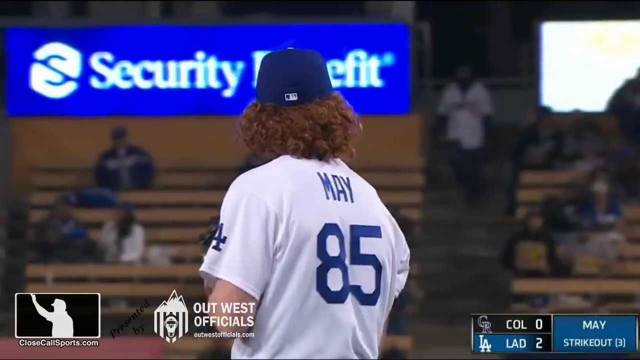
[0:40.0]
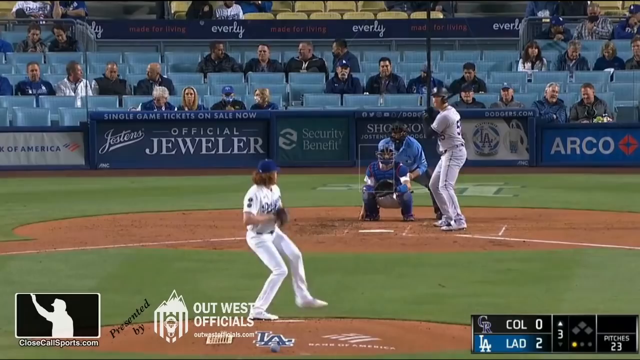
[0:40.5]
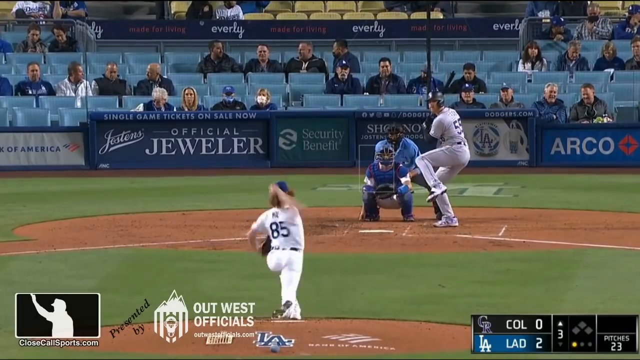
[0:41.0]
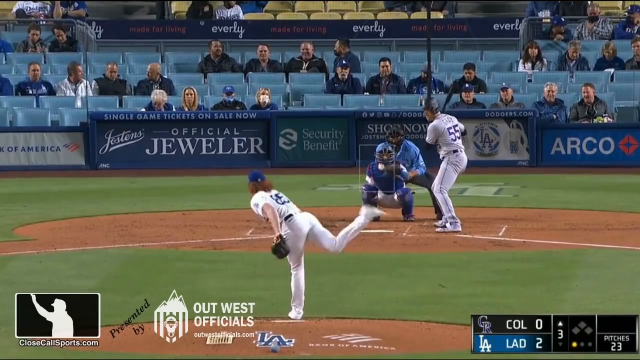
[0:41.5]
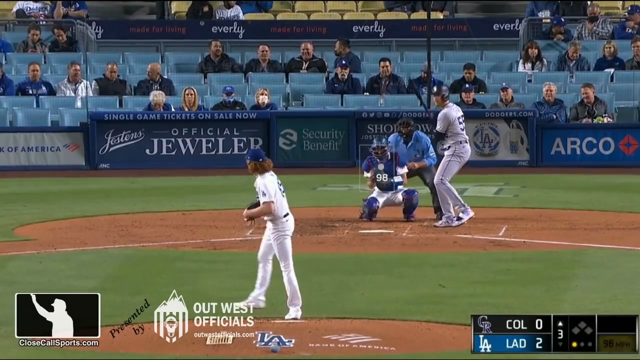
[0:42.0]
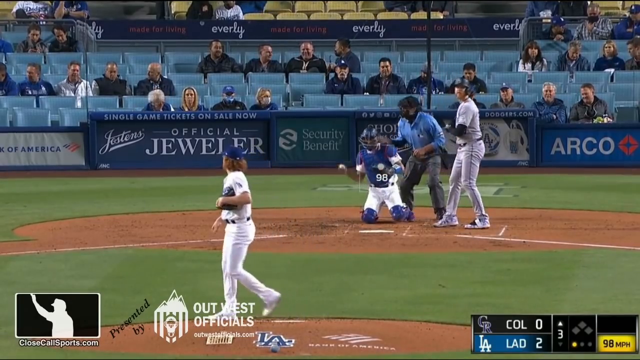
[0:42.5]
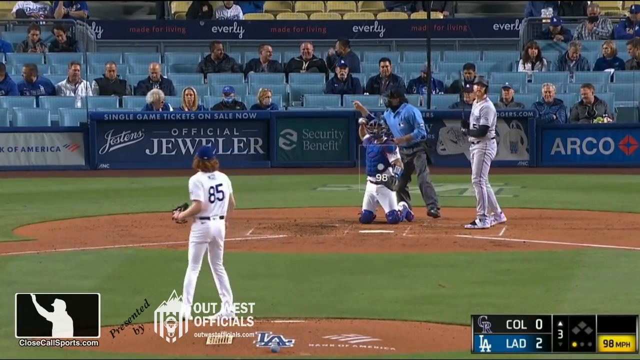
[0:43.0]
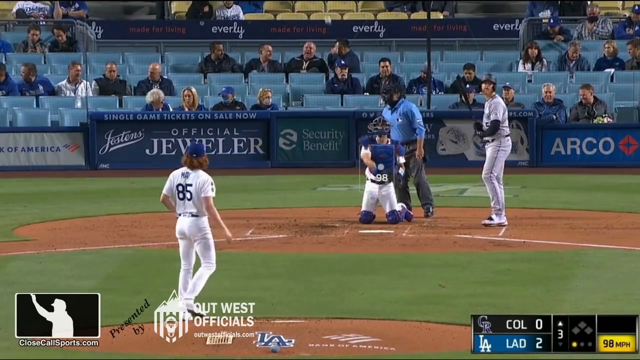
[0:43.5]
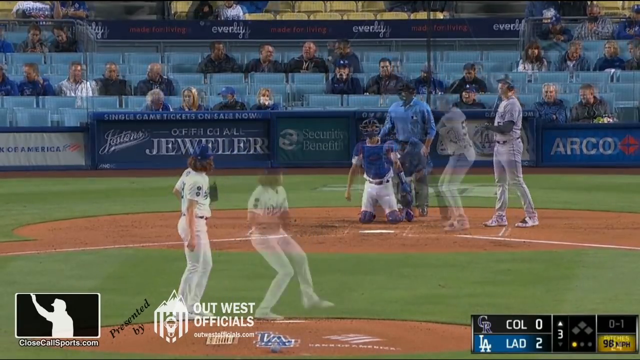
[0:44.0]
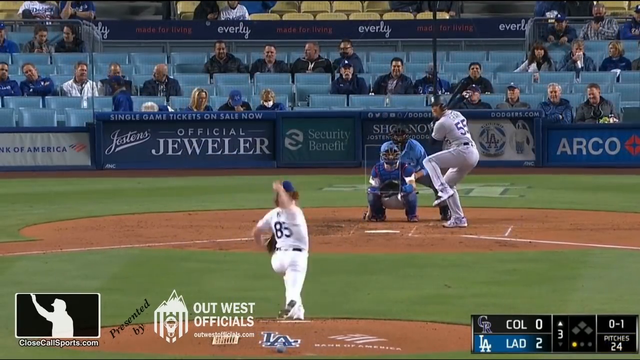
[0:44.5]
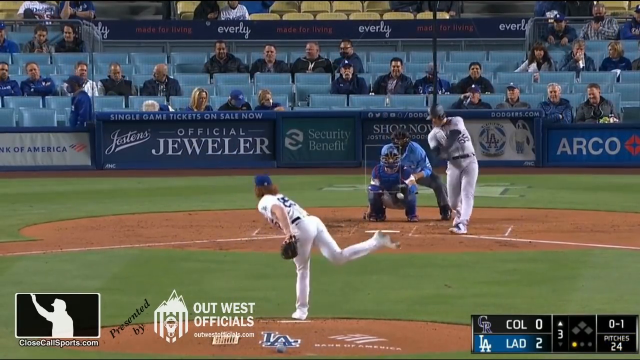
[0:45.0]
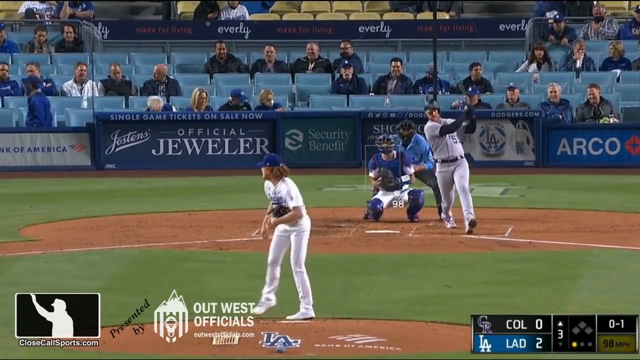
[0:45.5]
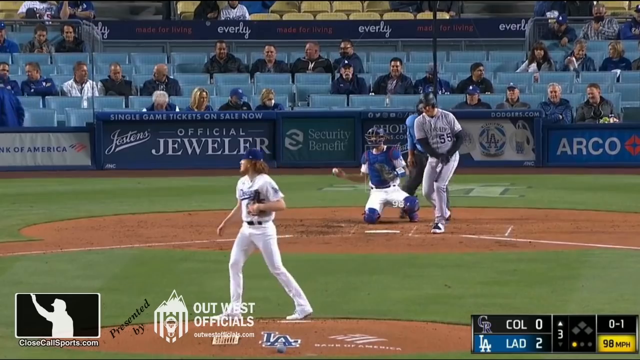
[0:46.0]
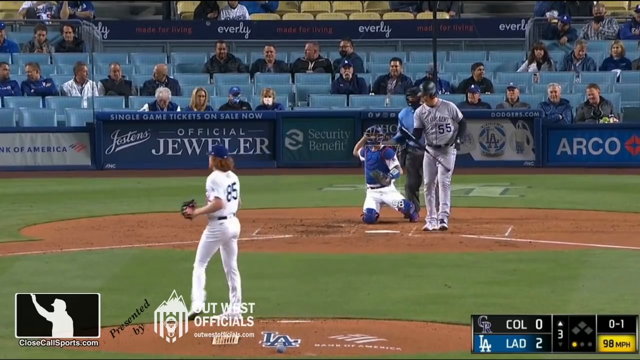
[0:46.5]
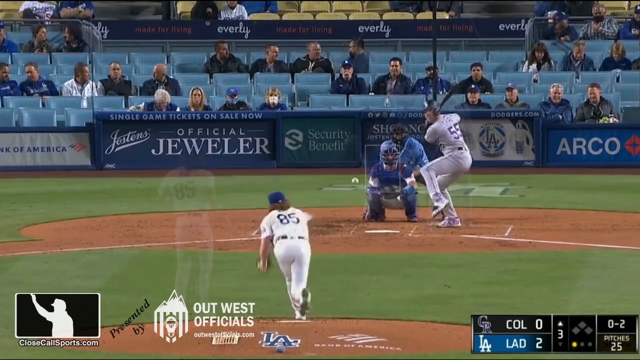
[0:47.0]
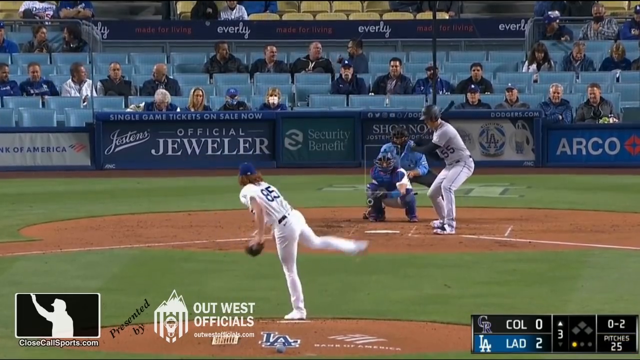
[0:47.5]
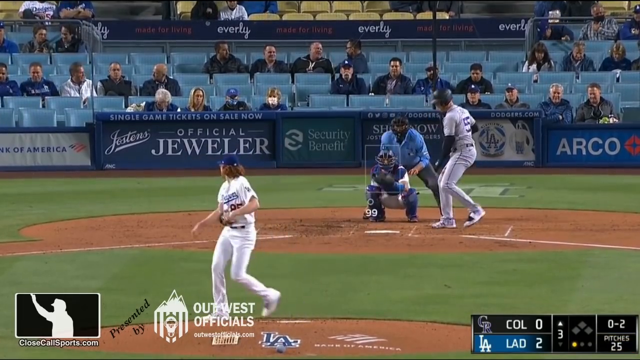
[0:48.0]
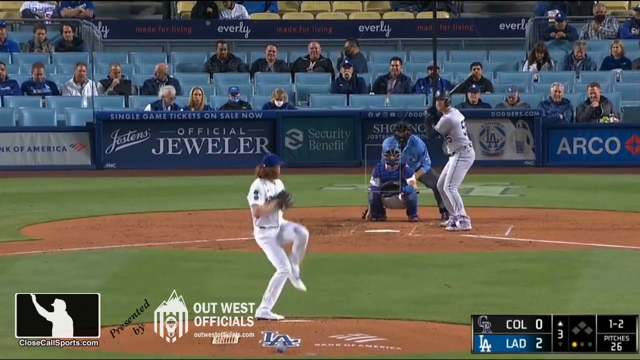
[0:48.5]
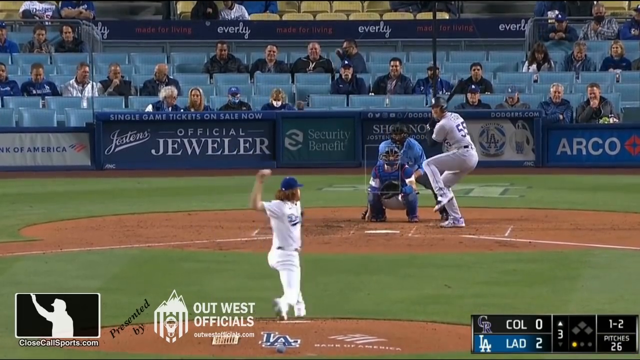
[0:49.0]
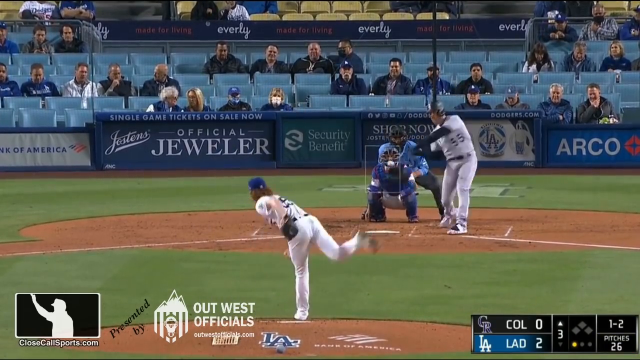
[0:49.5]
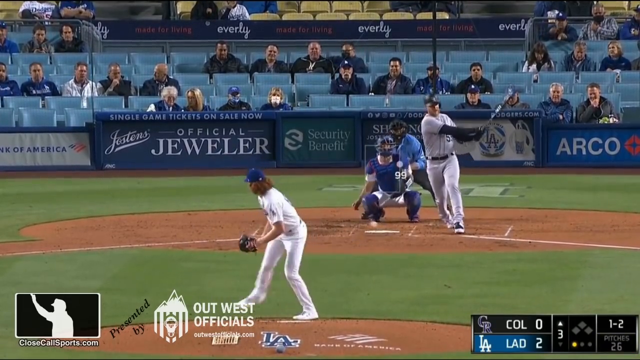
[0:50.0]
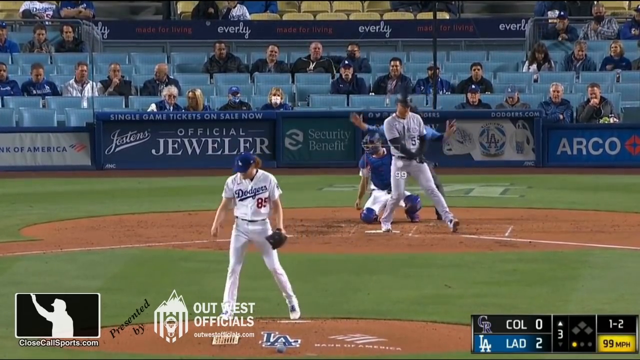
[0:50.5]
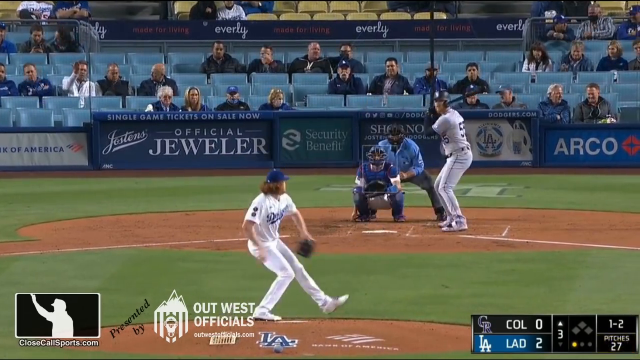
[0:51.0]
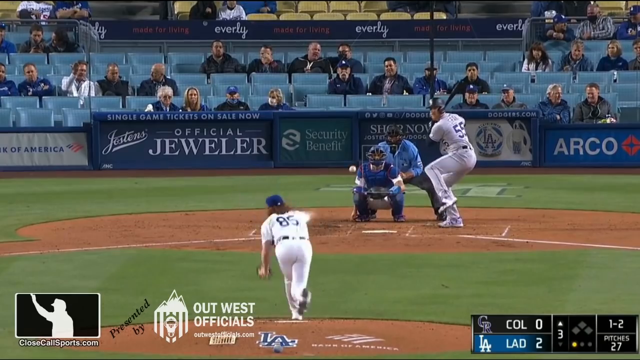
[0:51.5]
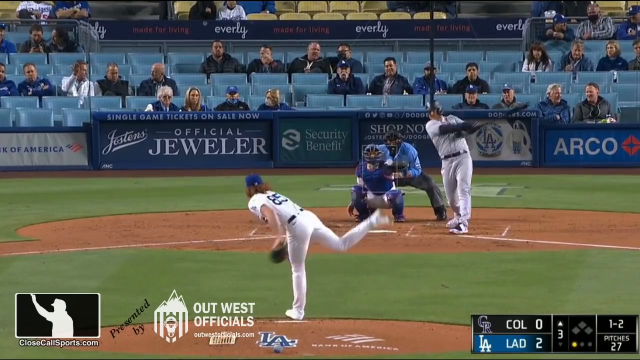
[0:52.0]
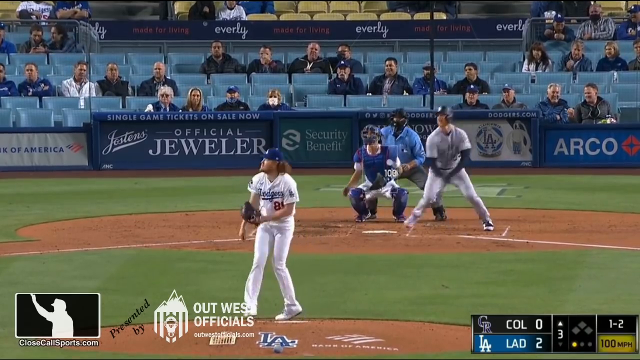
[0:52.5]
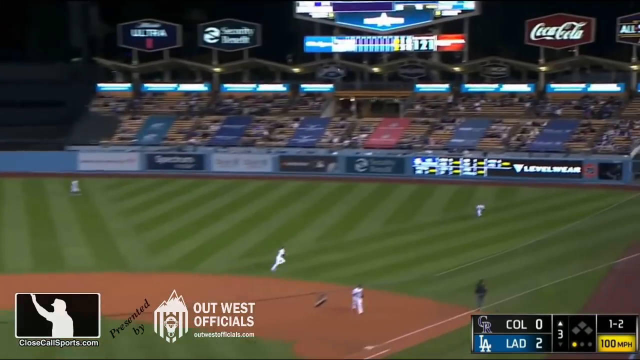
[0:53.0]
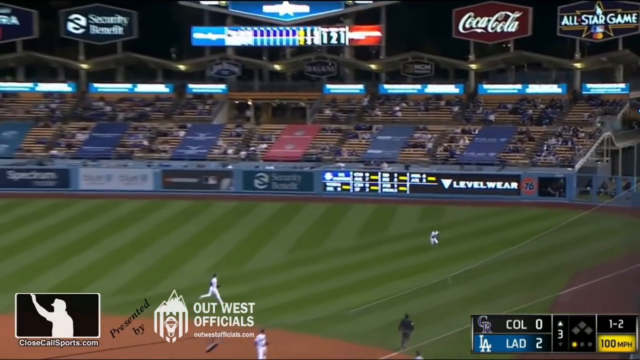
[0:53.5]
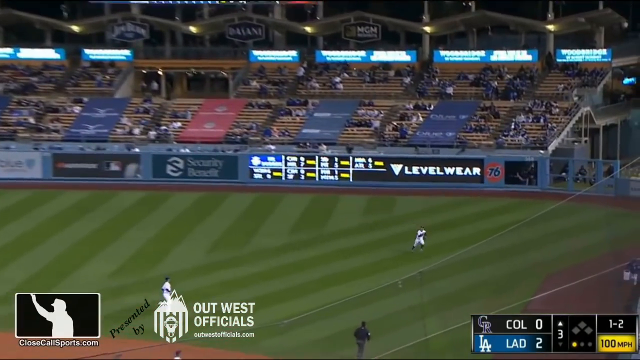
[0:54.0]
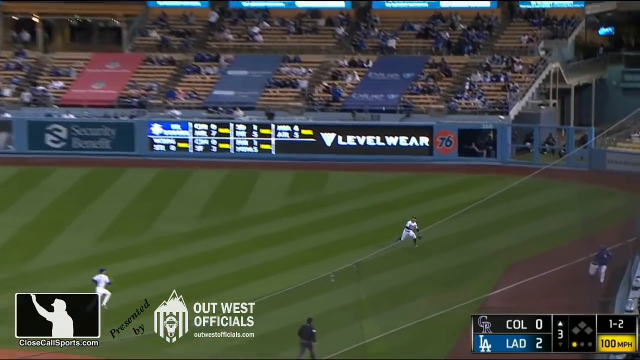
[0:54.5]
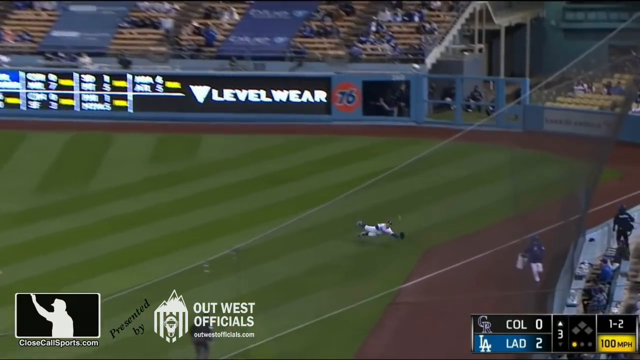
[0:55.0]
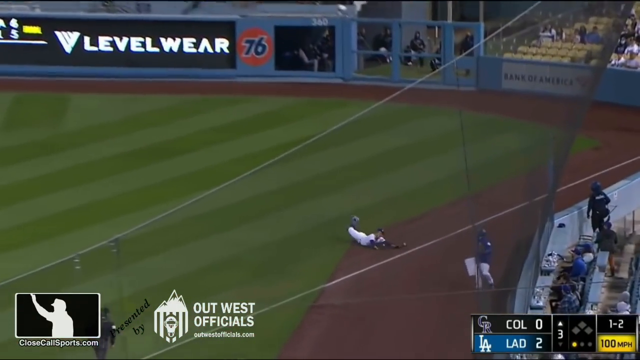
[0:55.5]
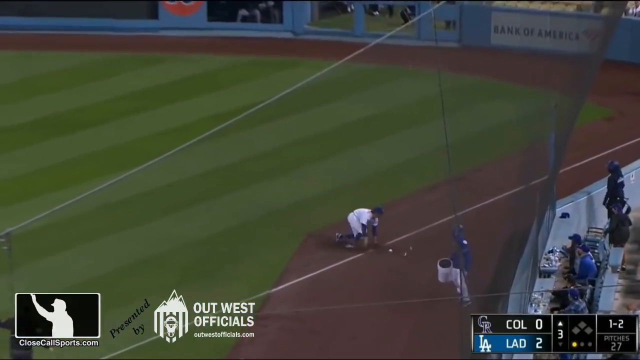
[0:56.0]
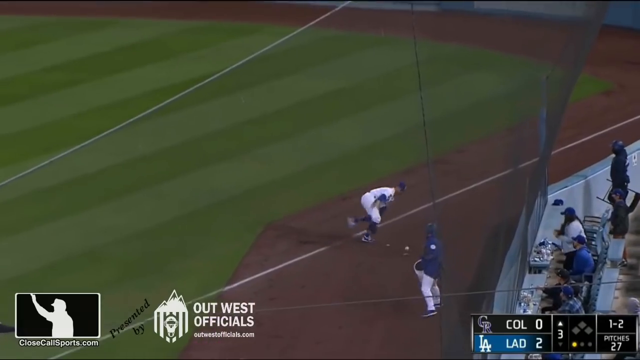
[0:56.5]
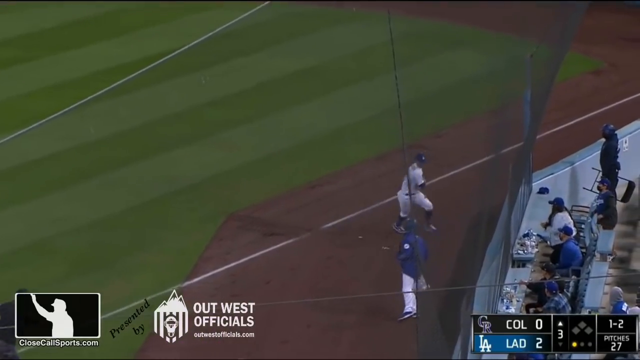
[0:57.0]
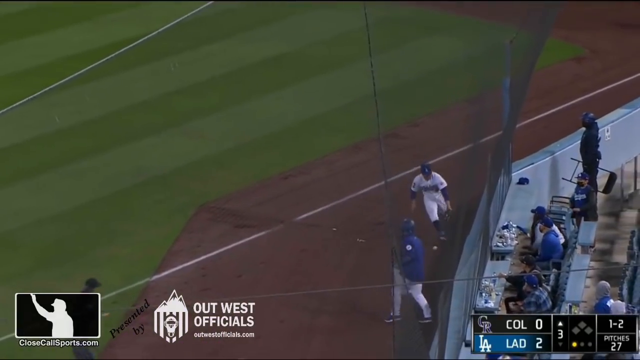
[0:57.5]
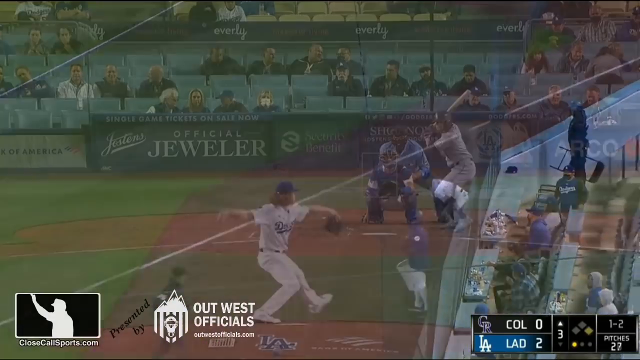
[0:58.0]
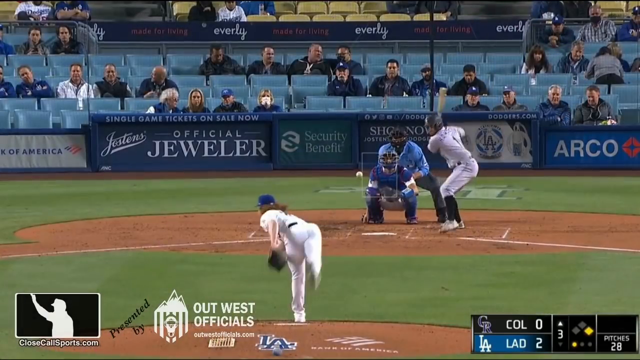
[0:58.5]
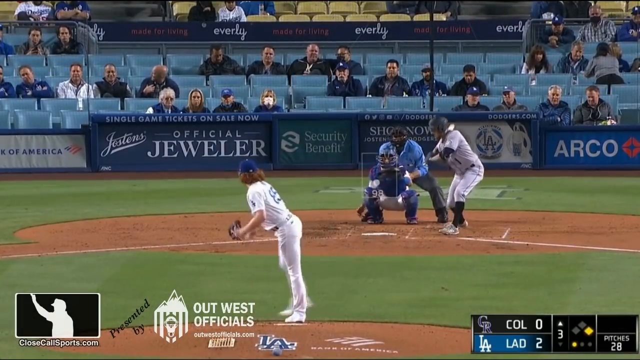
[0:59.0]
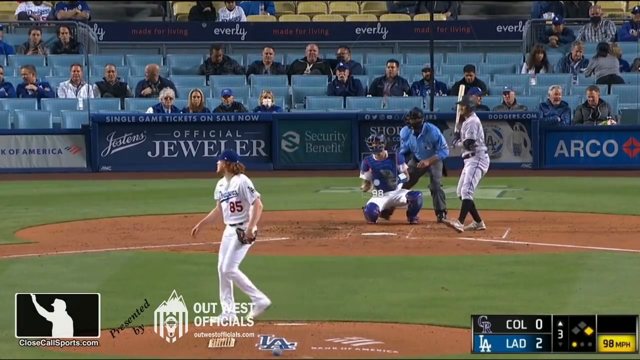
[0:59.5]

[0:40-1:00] The game between the Los Angeles Dodgers and the Colorado Rockies continues, with a long-haired Dodgers pitcher whose last name is May. He throws pitches toward the strike zone, getting batters looking and swinging, throwing a couple of balls low and a couple high, before giving up a shot to right field that is bobbled by the outfielder, allowing the batter to reach base. It shows his best zone for where he is pitching, throwing the ball a little low and not getting the calls. A few spectators are directly behind the backstop with the netting, along with yellow chairs, and the batter's box area shows various advertising and endorsements. At the end, the pitcher, number 85, May, walks back toward the mound.